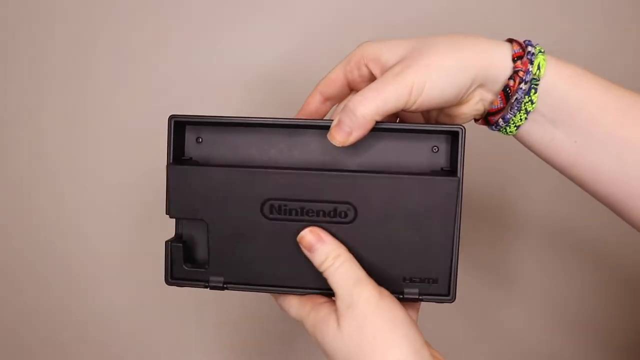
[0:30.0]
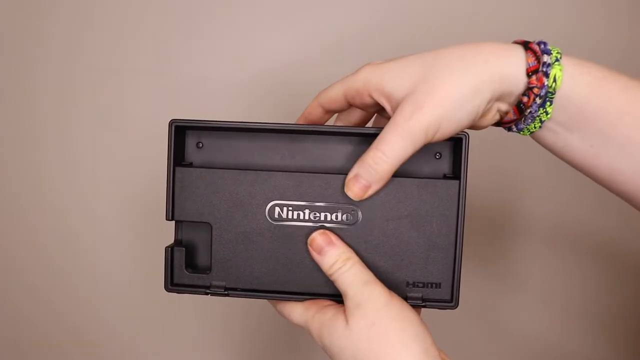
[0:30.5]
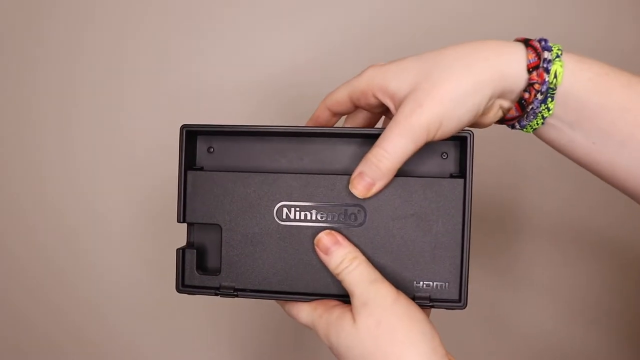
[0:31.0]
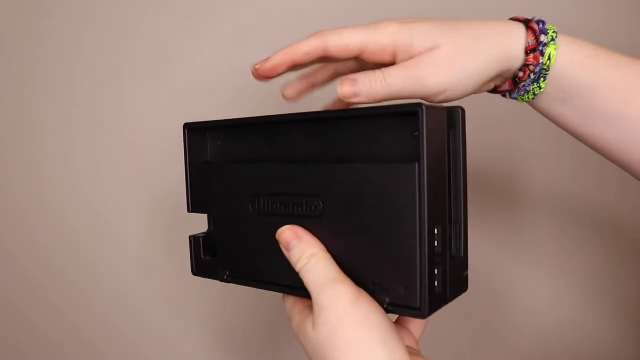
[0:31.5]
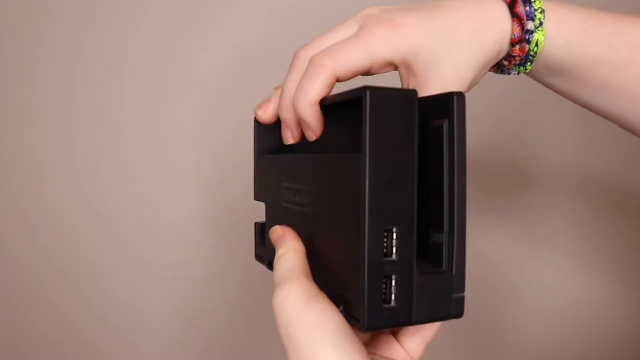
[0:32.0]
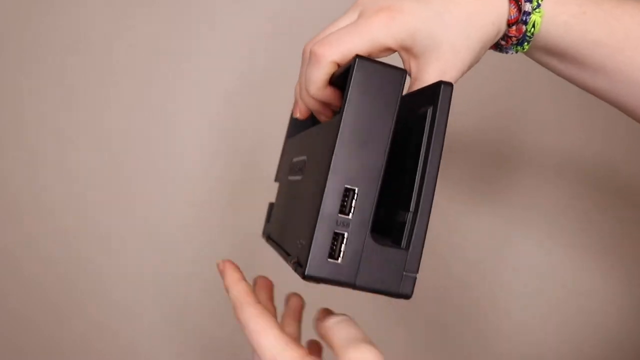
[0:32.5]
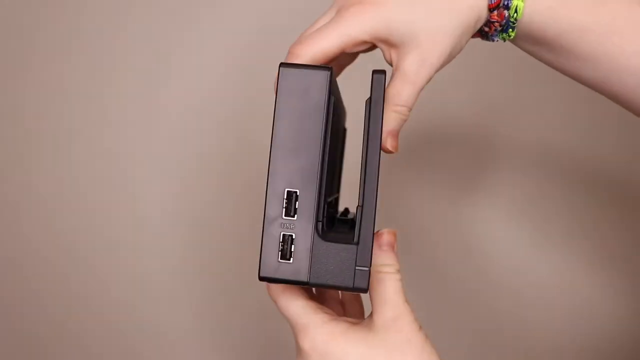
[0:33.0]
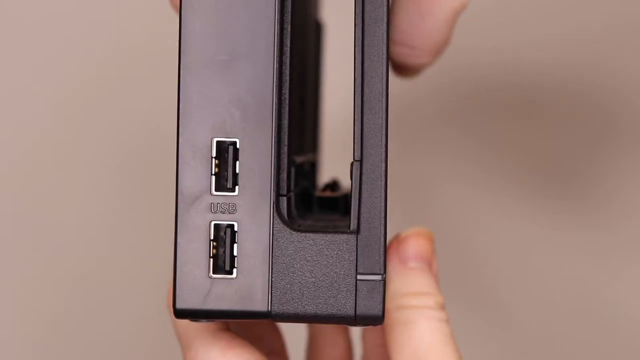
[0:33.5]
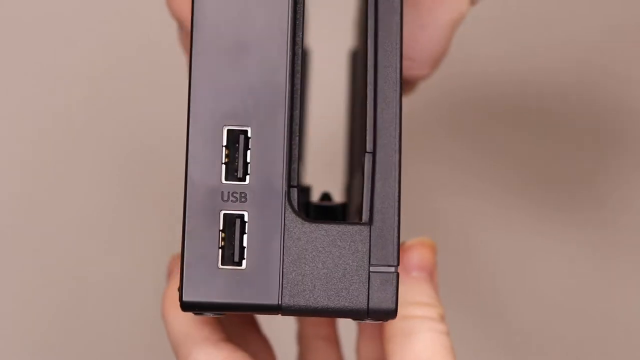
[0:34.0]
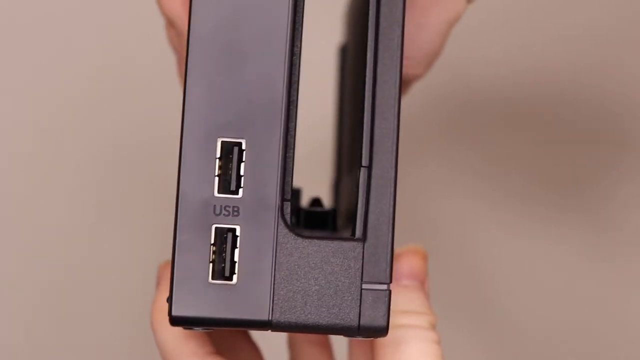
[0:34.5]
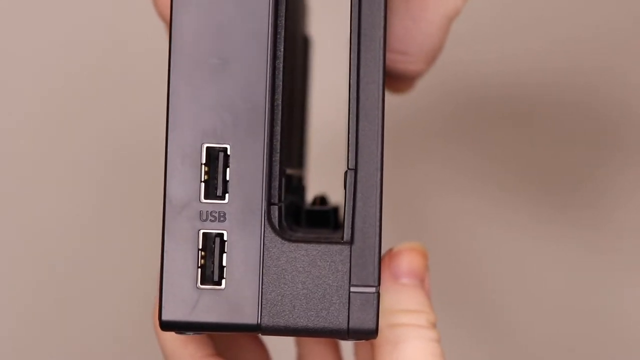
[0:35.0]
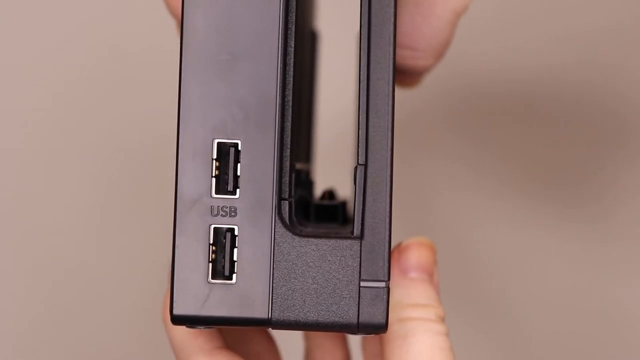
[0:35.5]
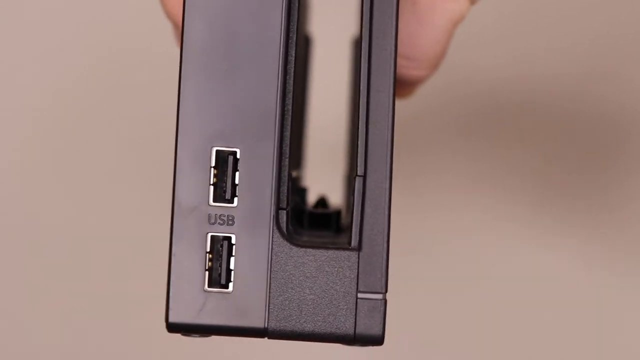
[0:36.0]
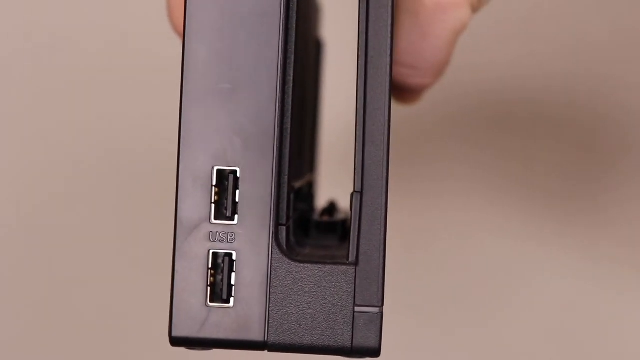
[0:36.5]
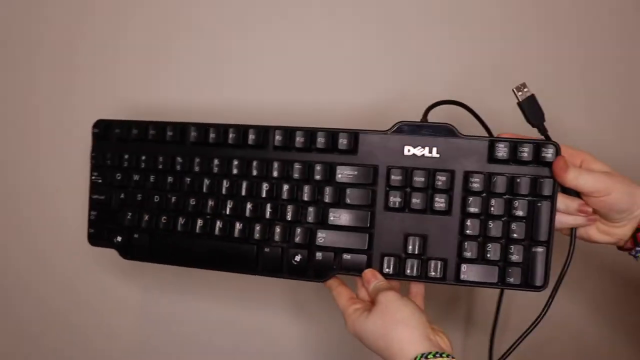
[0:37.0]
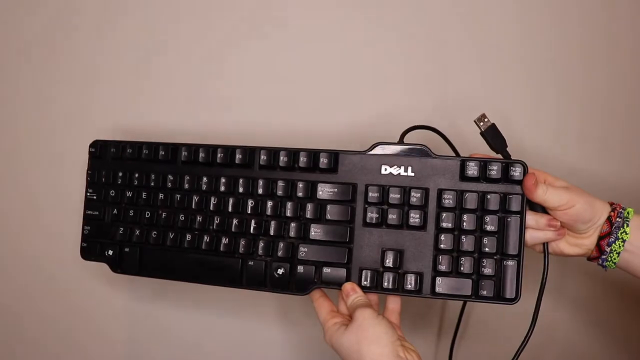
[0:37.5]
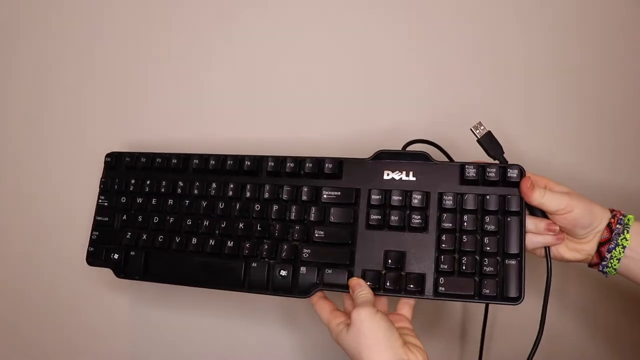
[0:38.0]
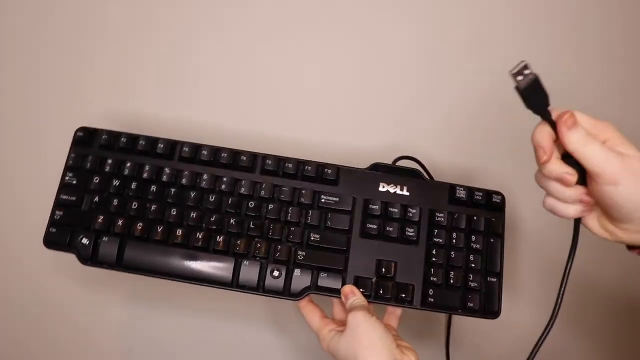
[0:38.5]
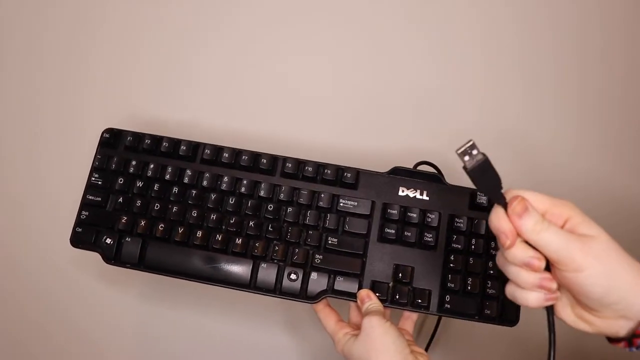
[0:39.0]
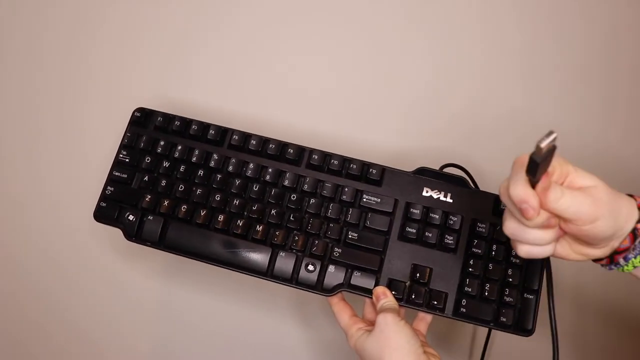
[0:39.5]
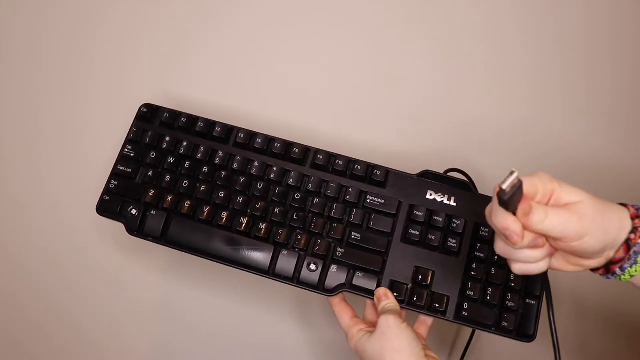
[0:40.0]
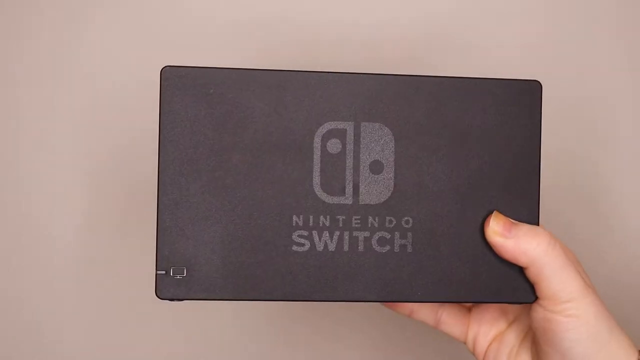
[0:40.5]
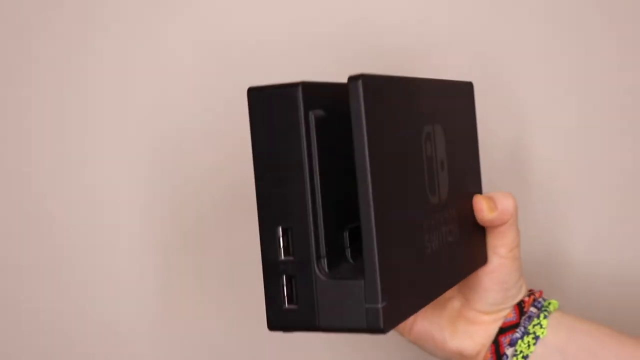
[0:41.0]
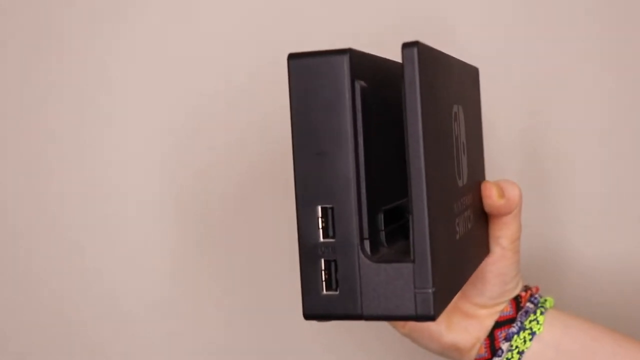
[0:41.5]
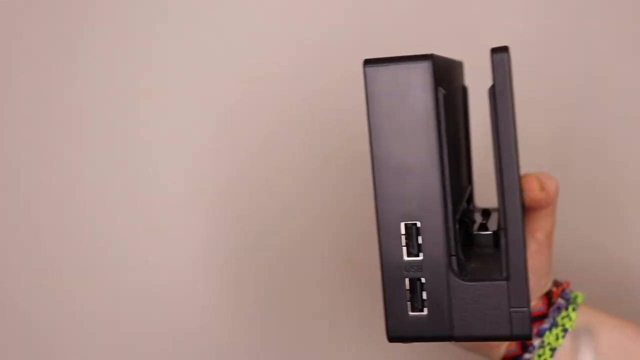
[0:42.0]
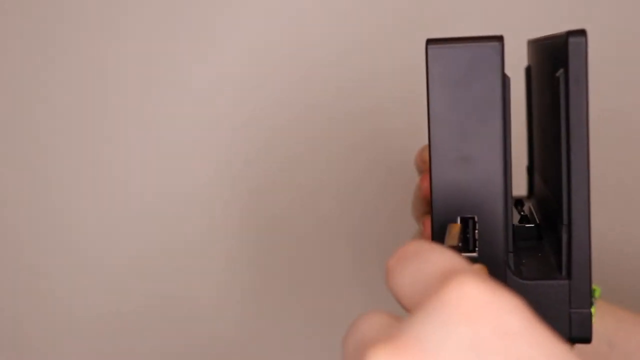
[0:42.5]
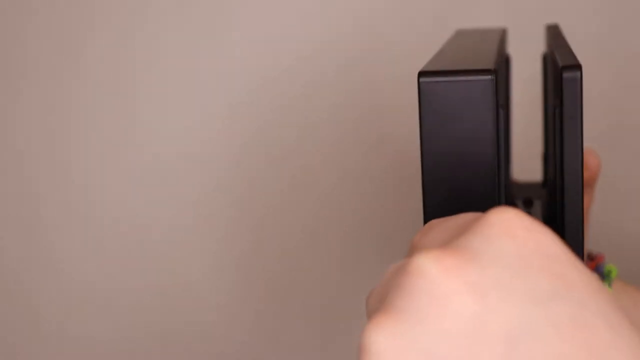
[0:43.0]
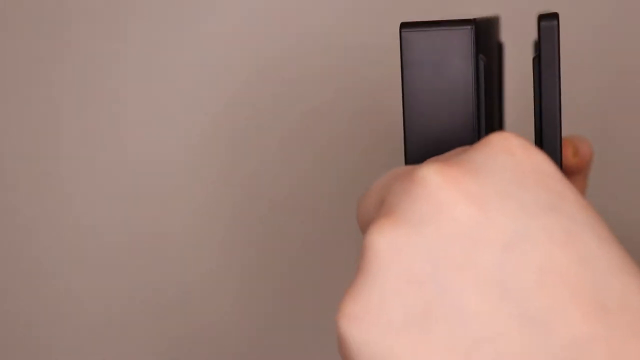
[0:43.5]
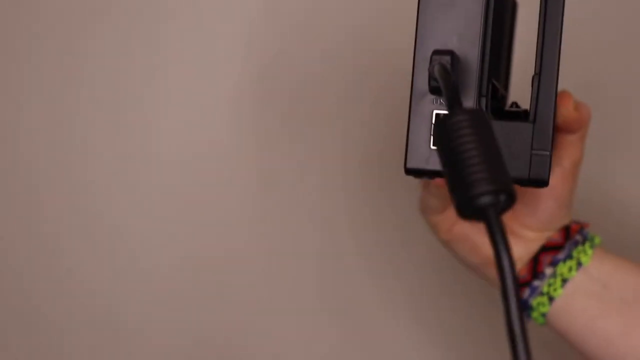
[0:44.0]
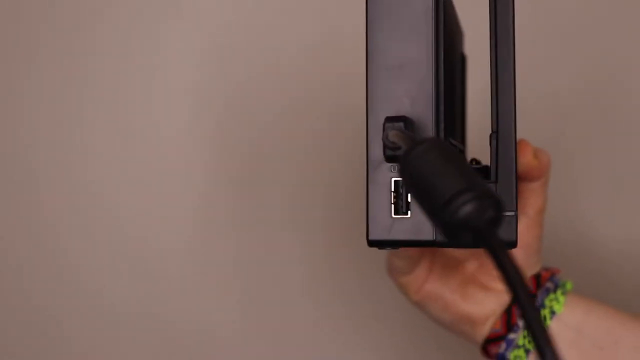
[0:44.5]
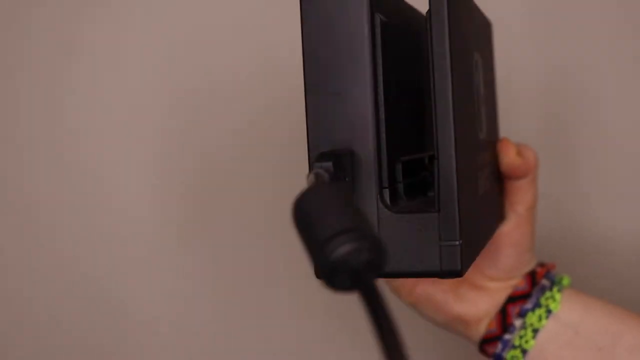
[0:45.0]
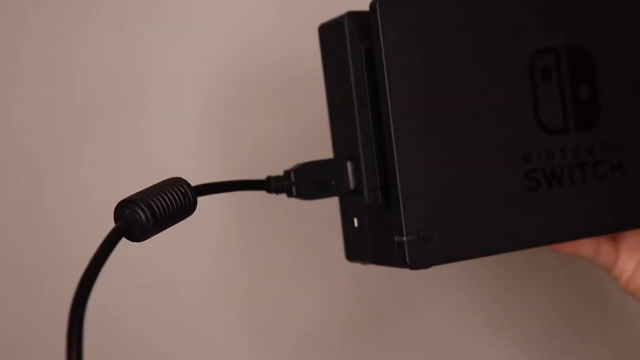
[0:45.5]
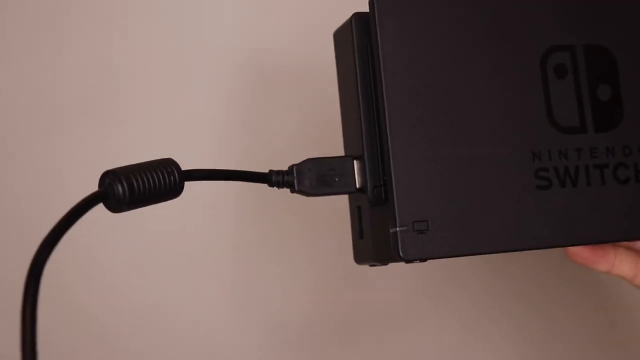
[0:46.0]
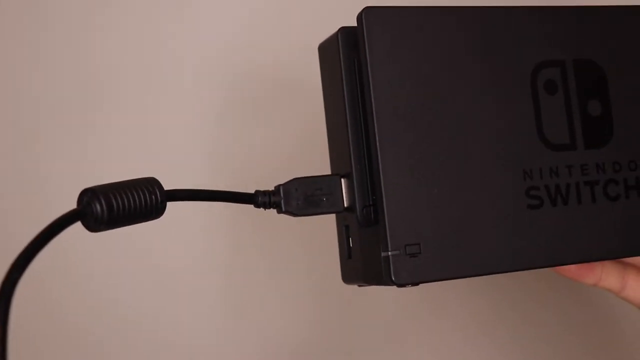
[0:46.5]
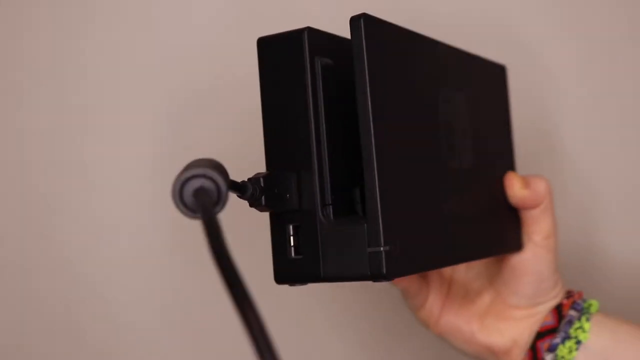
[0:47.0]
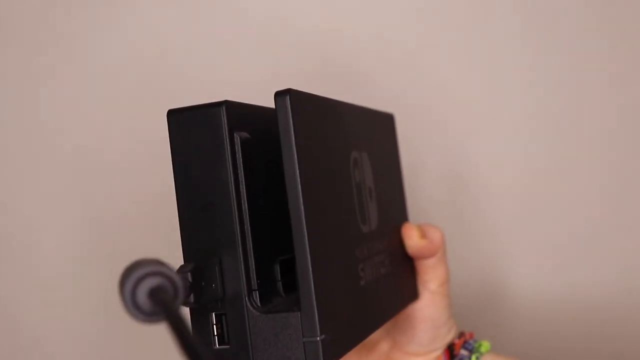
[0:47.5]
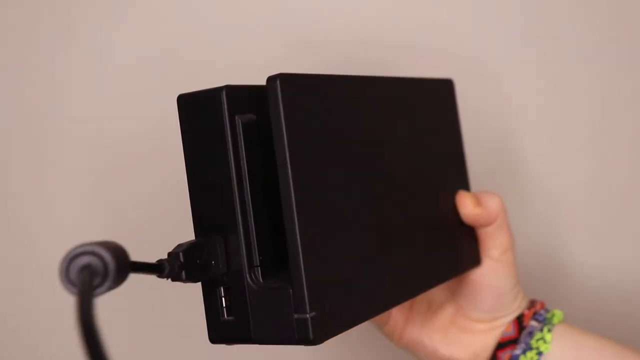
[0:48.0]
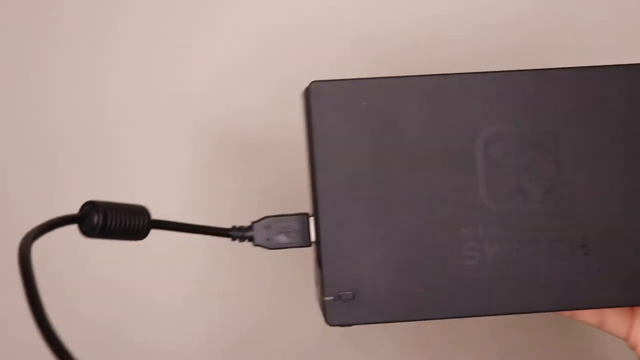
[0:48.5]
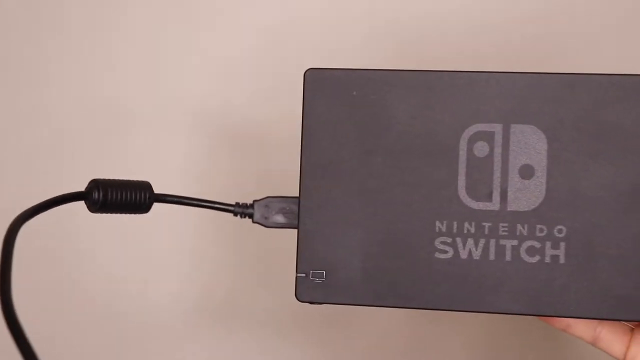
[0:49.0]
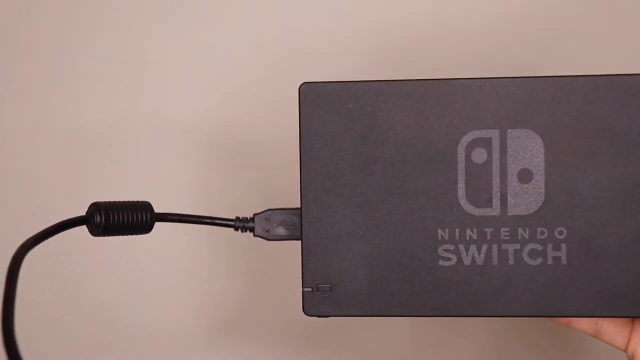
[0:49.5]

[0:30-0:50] A person who looks to be female holds a Nintendo box and turns it on all sides, showing what it looks like in the middle. She wears braided green and pink bracelets on her right wrist. She shows how to plug the adapter into the side port, a USB port; there are two of them. The adapter comes connected to the keyboard, and she takes one side and plugs it into the upper port of the Nintendo box while it stays attached to the keyboard. She holds the box with two hands: her right hand is on the top with her thumb over the front, and her other hand is underneath with its thumb holding the bottom of the box. She spins it around, showing all angles, and holds the adapter plug up for a second or two so it is clear what she is holding and what she will plug it into. Then there is a brief flash of a screen like one on a computer.